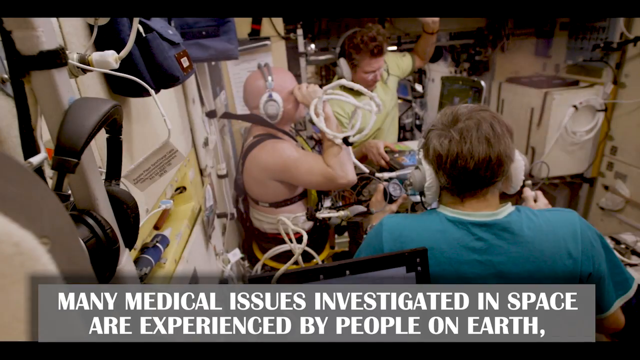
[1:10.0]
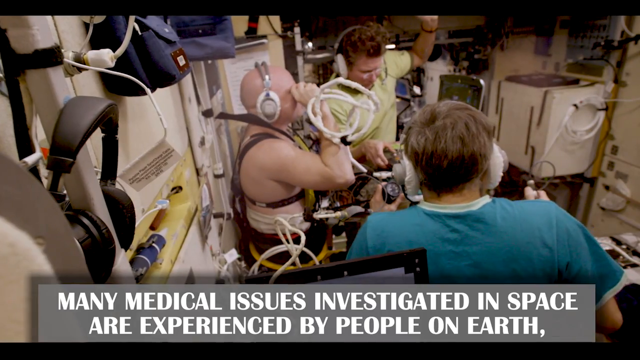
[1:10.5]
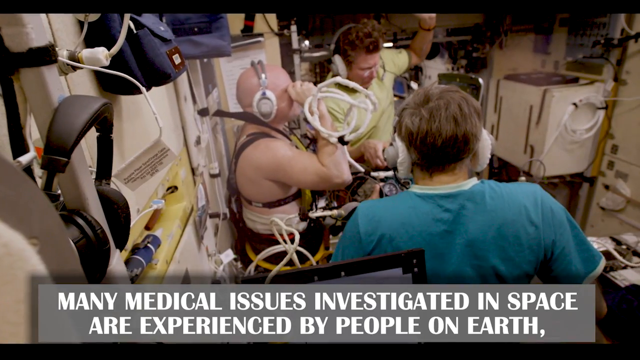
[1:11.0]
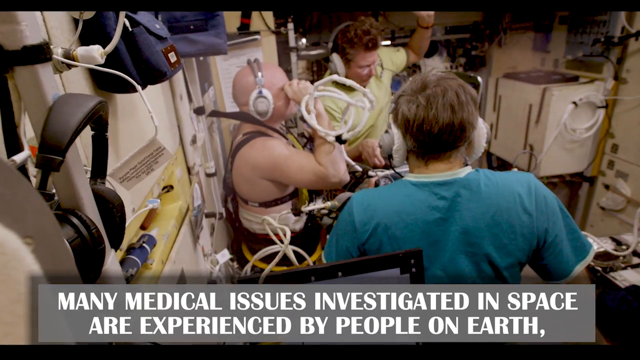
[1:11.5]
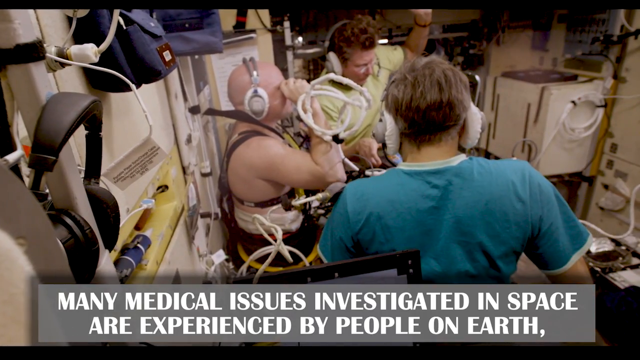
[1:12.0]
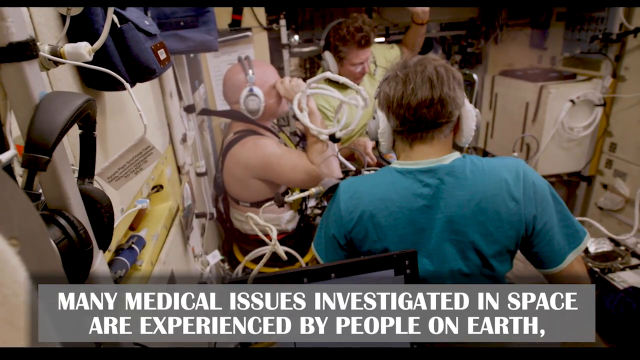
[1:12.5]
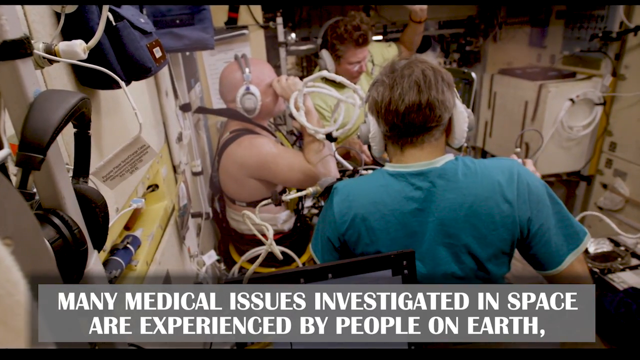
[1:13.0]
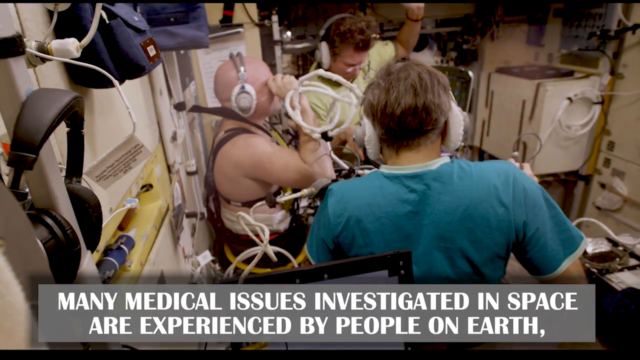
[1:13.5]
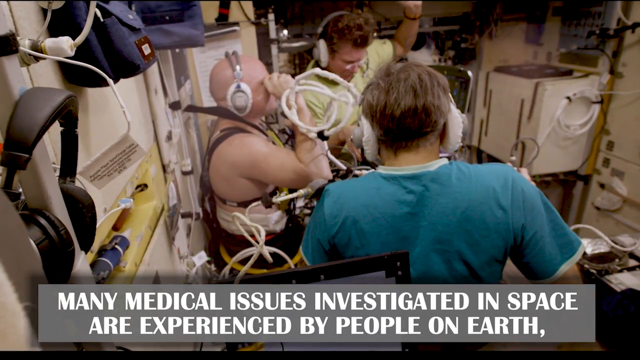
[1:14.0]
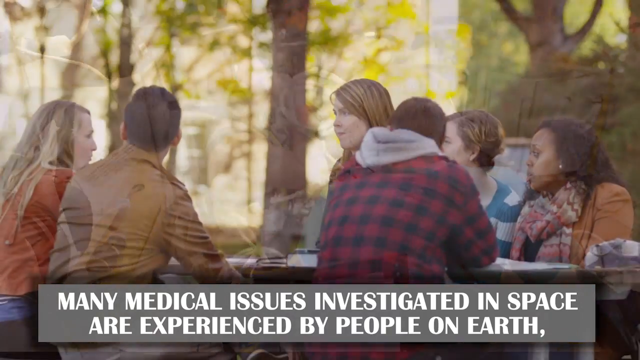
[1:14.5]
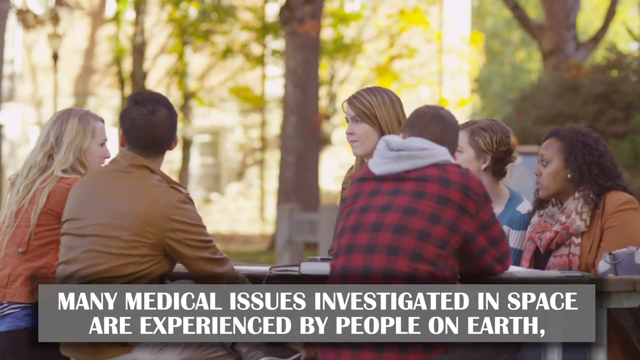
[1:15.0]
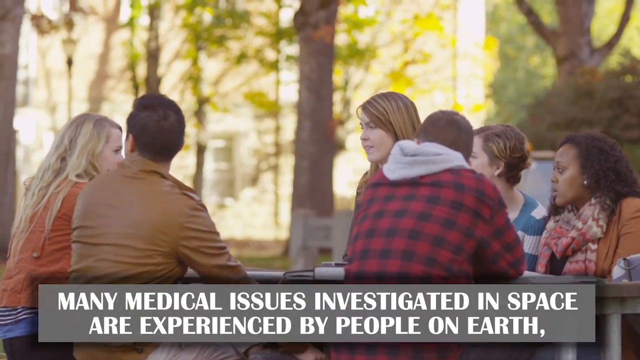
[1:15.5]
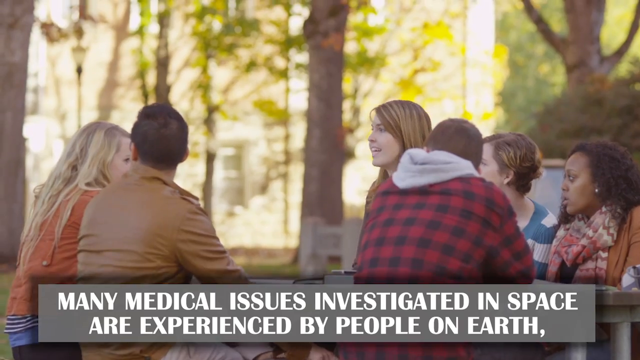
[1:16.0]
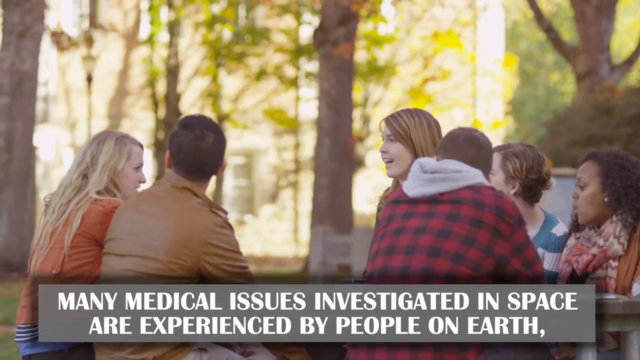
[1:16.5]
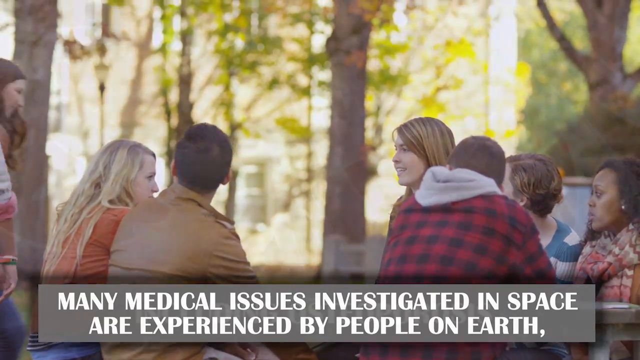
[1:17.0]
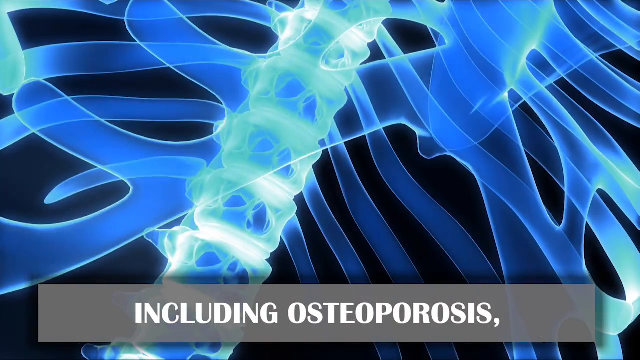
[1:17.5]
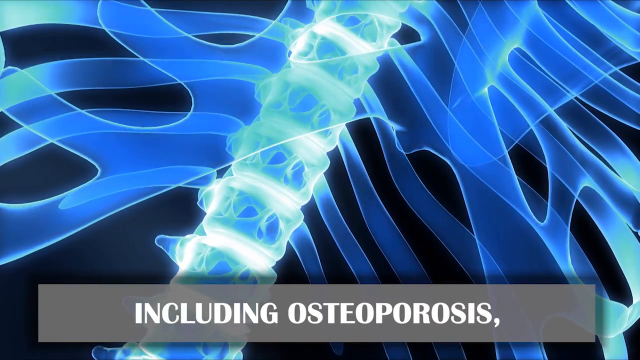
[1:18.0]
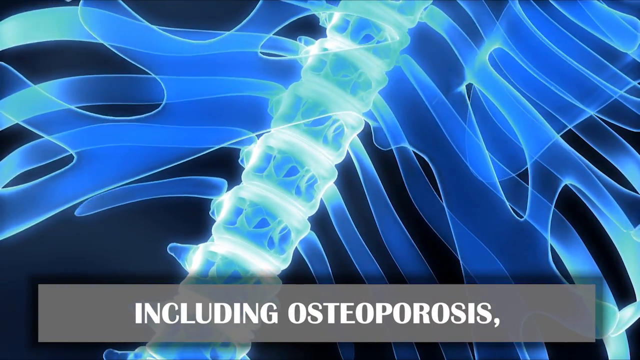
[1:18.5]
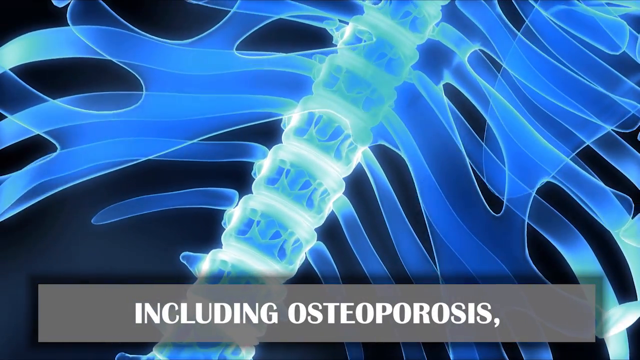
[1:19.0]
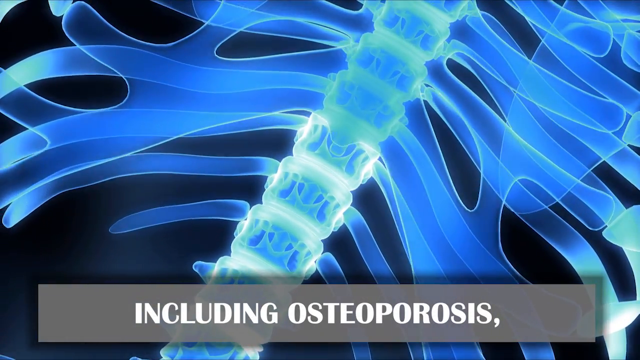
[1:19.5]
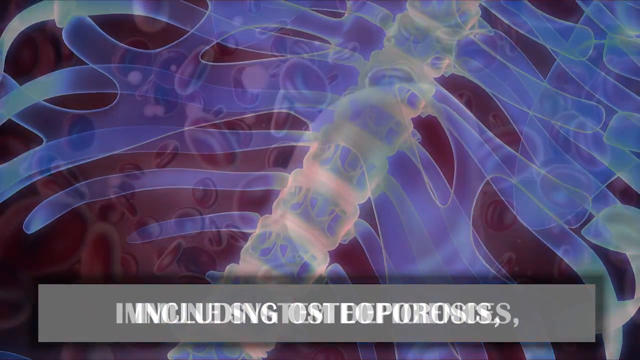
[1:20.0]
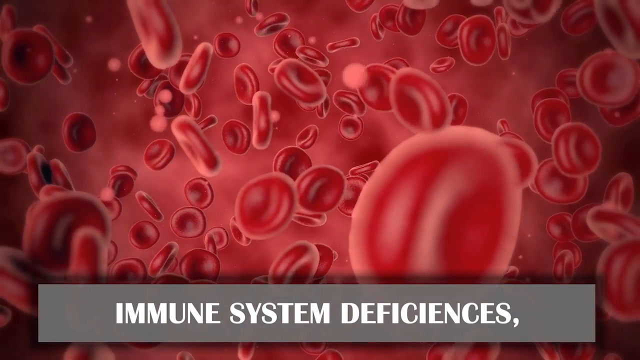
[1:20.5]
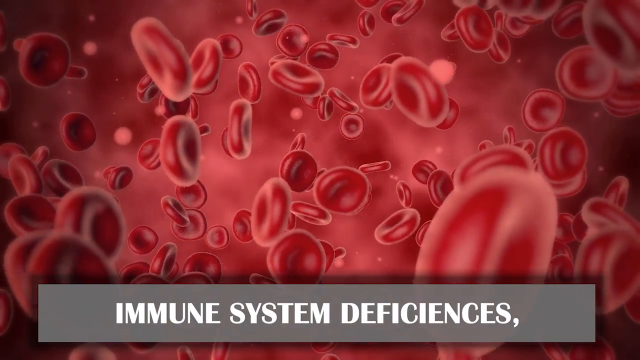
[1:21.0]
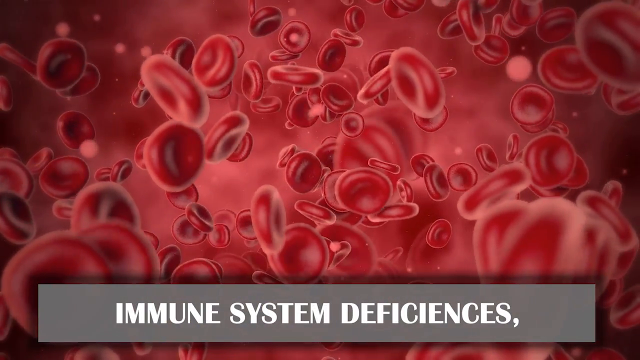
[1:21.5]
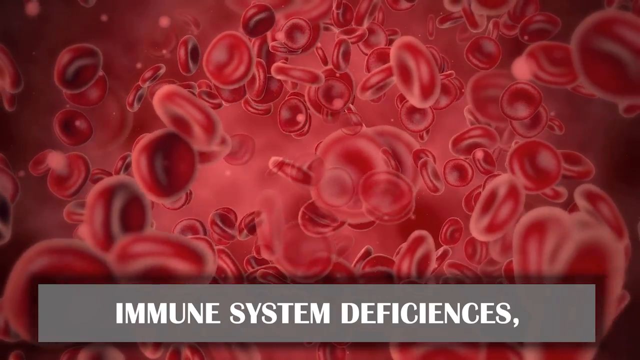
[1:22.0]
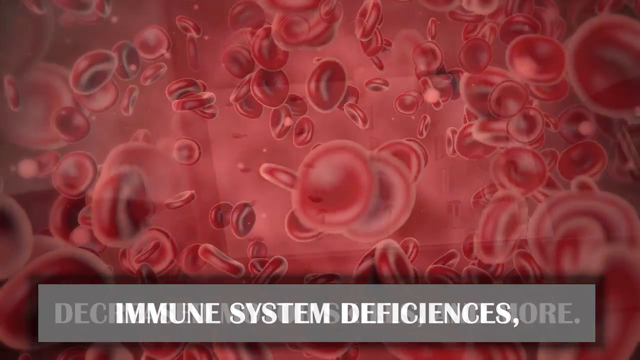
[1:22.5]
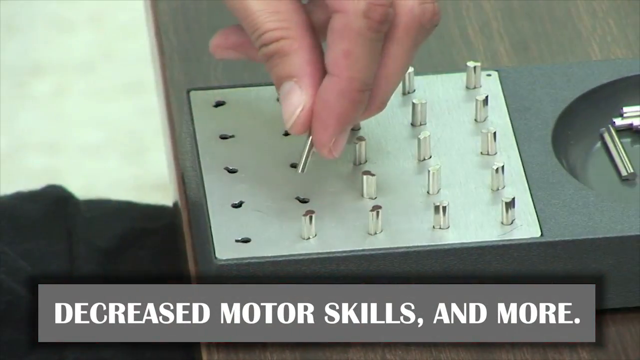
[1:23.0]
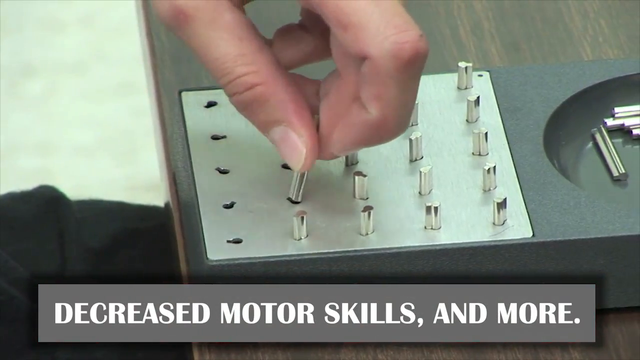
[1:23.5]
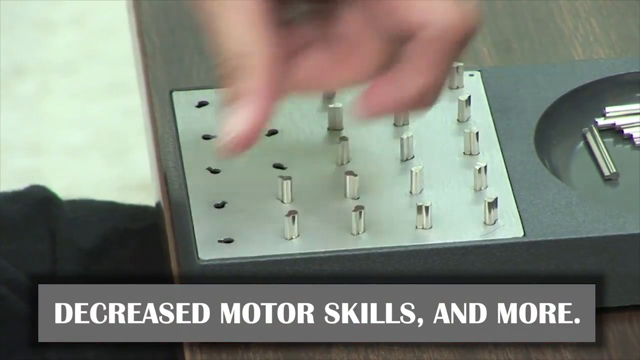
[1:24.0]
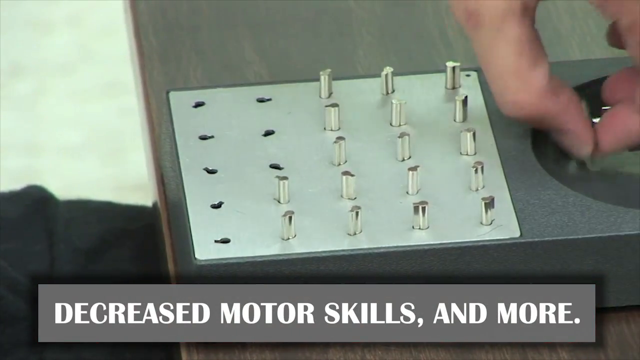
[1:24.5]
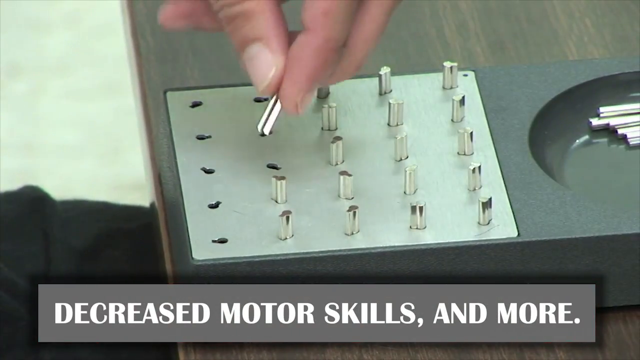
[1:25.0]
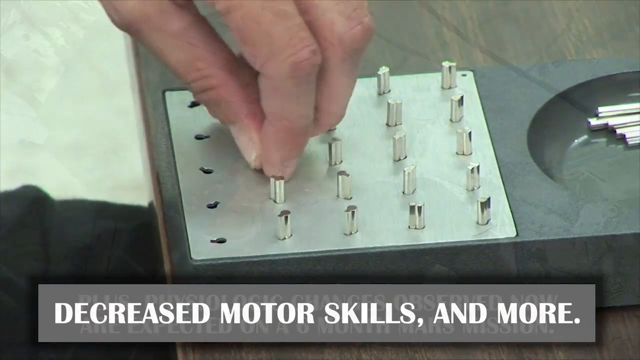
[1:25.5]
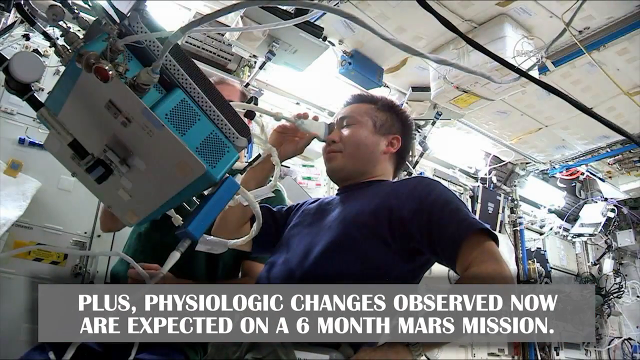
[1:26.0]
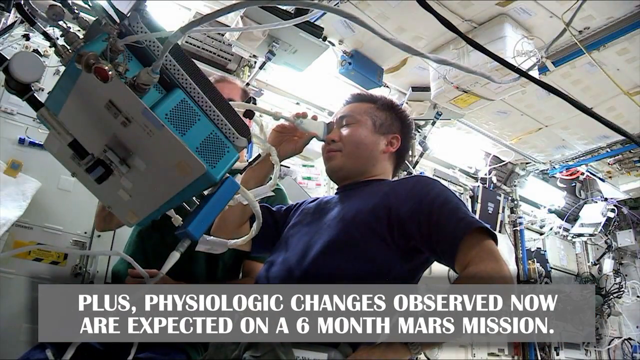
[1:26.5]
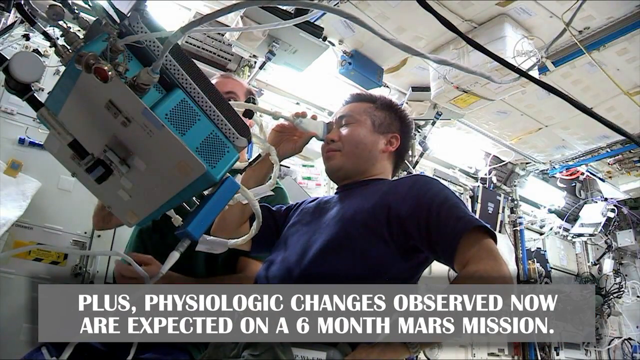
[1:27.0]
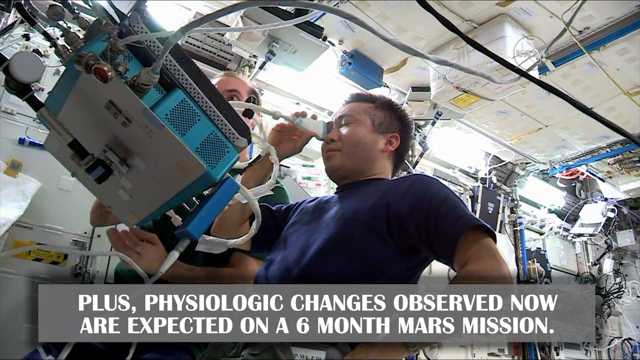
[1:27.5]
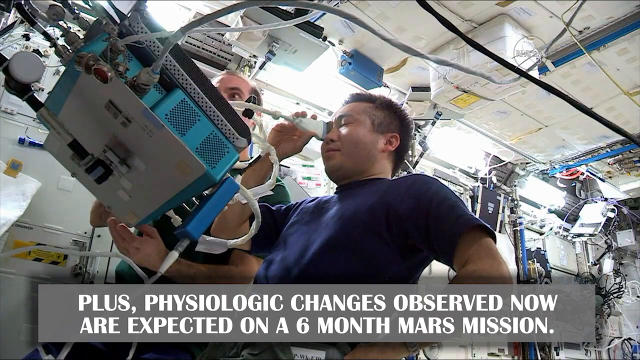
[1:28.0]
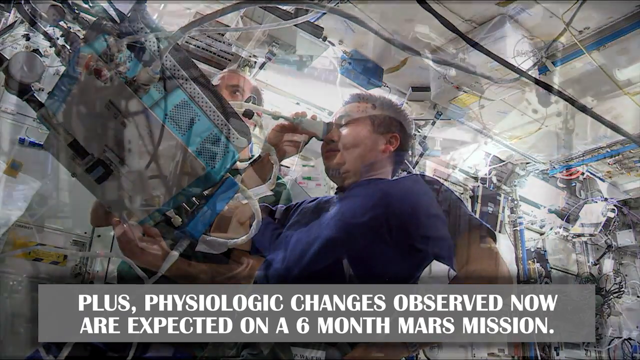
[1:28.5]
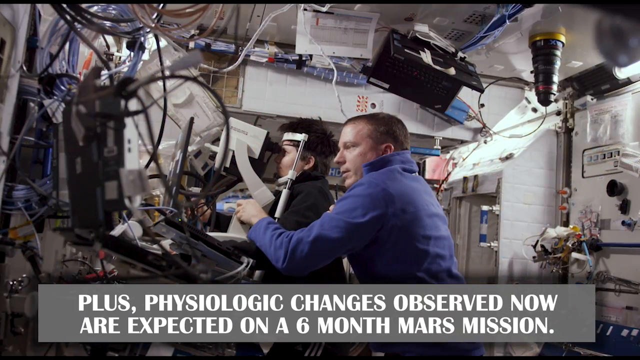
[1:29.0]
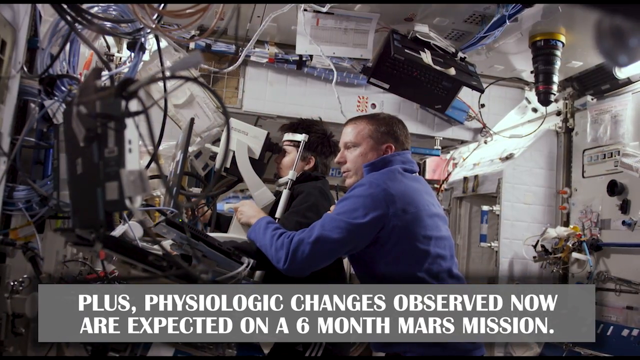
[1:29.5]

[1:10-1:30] Three men are inside some sort of chamber, probably at NASA. There are headphones at the front left of the frame, and all three men in the middle wear gray headphones. The man in the middle holds something up to his eye; what the other two are doing is not quite visible. The man closest has his back to the camera, while the right sides of the middle man and the man furthest from the camera face the camera. Gray text outlined by a darker gray text box along the bottom reads "Many medical issues investigated in space are experienced by people on Earth." The video flows into a shot of six people sitting at what is probably a picnic table, apparently having a discussion, with the same text at the bottom. Next is a moving image of a skeleton in glowing blue and white, with just the ribs and spine visible, and the text "including osteoporosis." It then shows red blood cells floating around, with the text "immune system deficiencies." The blood cells disappear, and a rectangle on a table with holes appears; someone's hand places little metal rods into the holes. The text reads "decreased motor skills and more." Each of these texts is in gray, outlined by a darker gray text box. Next, a man sits holding an eye scanner up to his right eye with his right hand, and somebody appears to be looking over him at a monitor. Floor-to-ceiling computer equipment and wires surround the men, with a lot of white light and a white ceiling. This flows into a shot of a person, whose gender is unclear, getting their eyes scanned in what looks like a normal ophthalmology setup, with their chin resting on a device and their eyes up against an eye-checking machine. A man fiddles around with the machine scanning the person's eyes. Gray text outlined in a darker gray box reads "plus physiologic changes observed now are expected on a six-month Mars mission." The room is totally full of wires and computer equipment, with things hanging, including what looks like a laptop hanging from the ceiling.